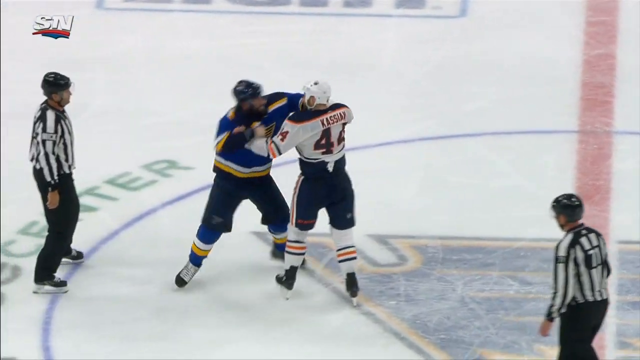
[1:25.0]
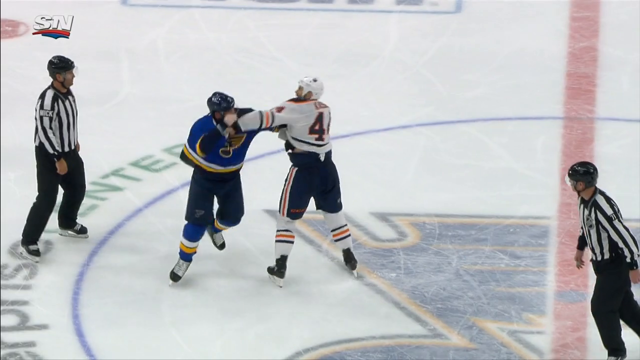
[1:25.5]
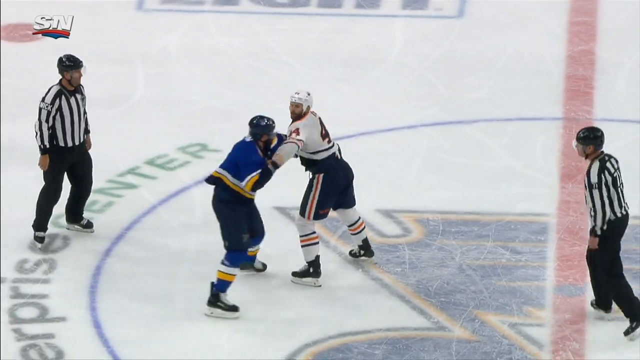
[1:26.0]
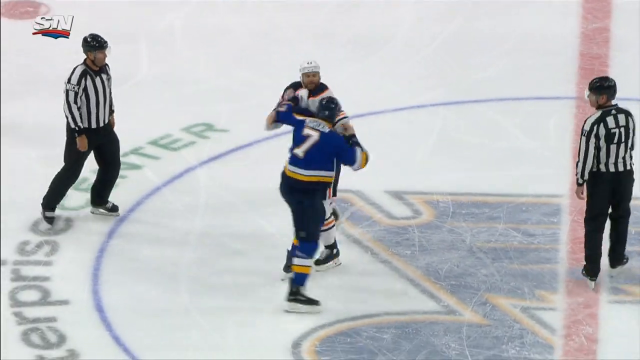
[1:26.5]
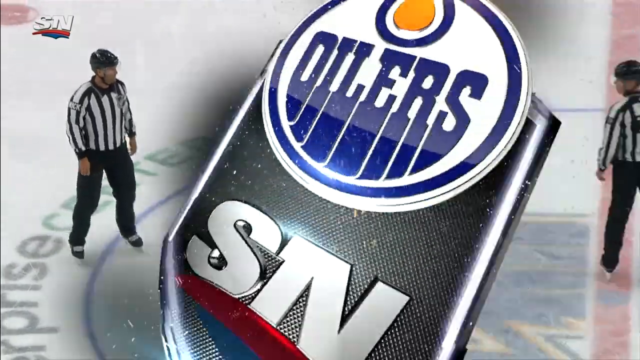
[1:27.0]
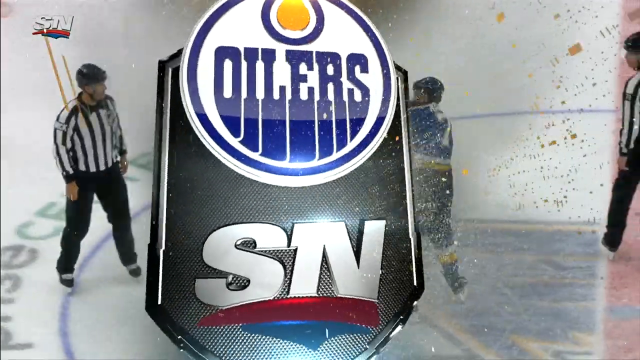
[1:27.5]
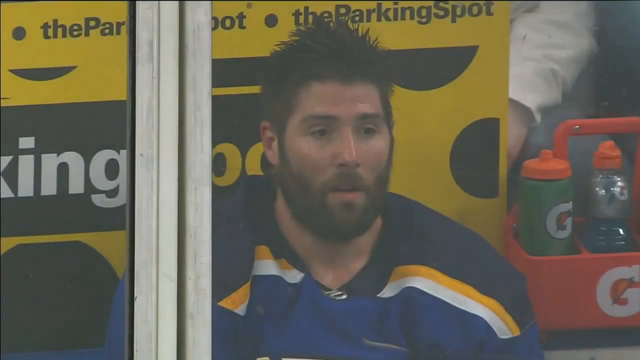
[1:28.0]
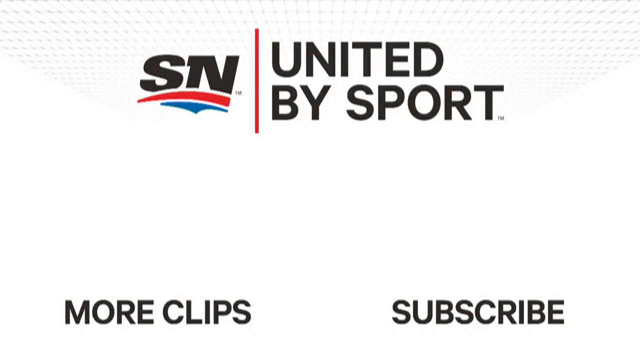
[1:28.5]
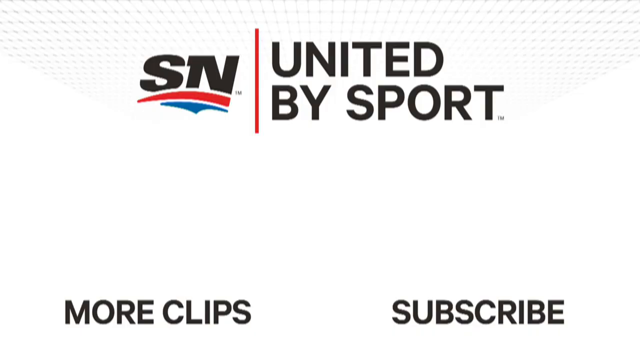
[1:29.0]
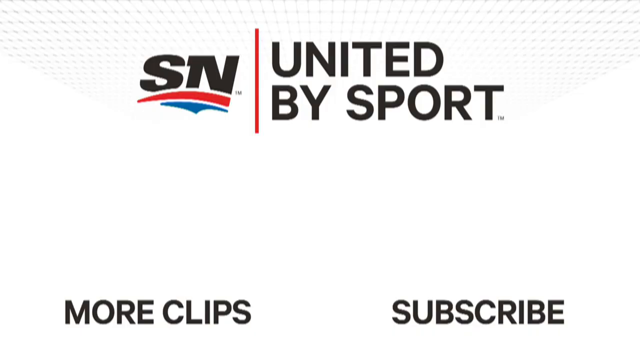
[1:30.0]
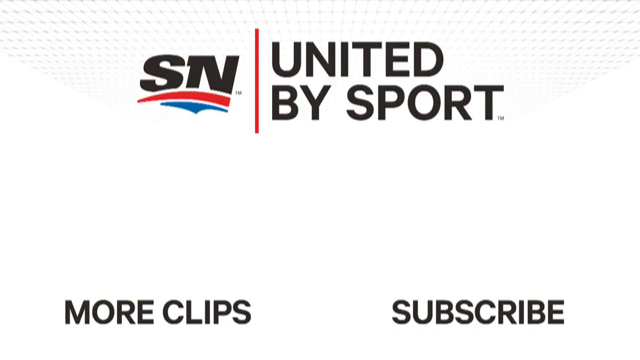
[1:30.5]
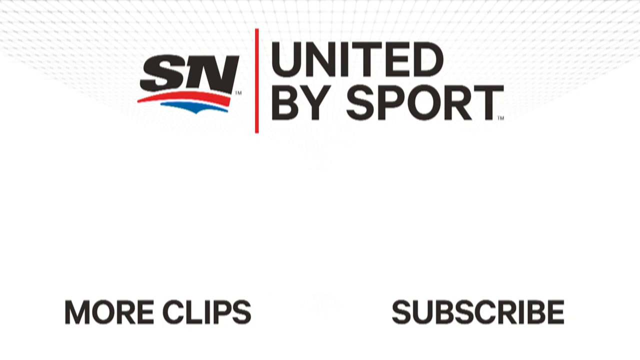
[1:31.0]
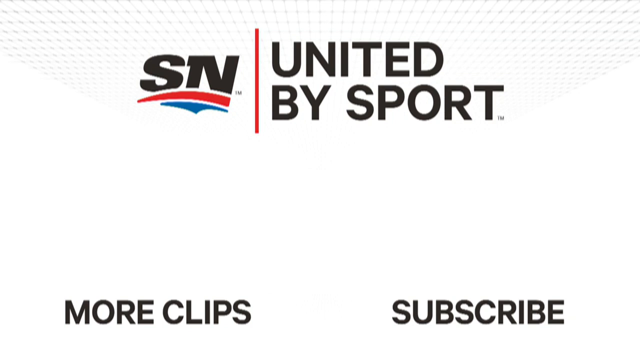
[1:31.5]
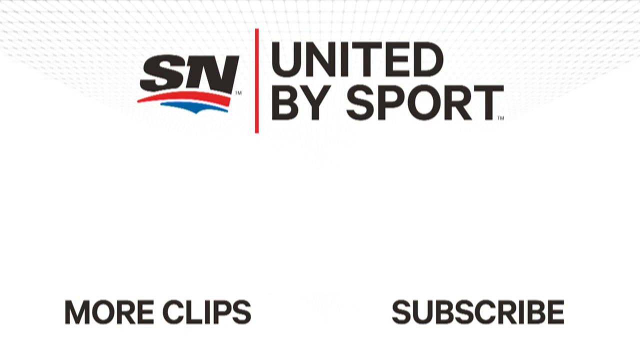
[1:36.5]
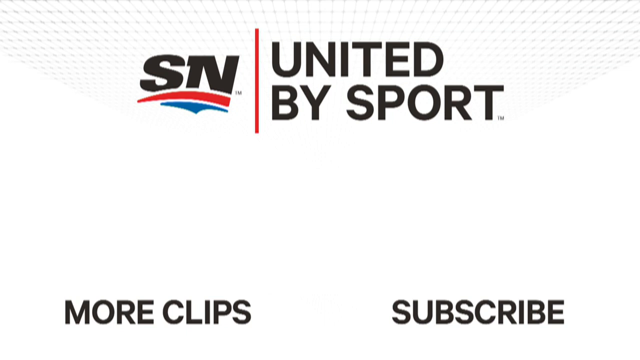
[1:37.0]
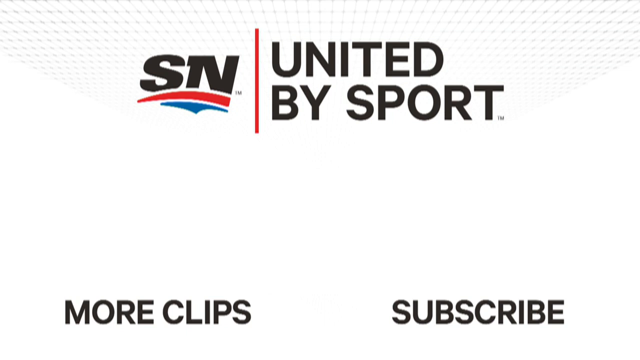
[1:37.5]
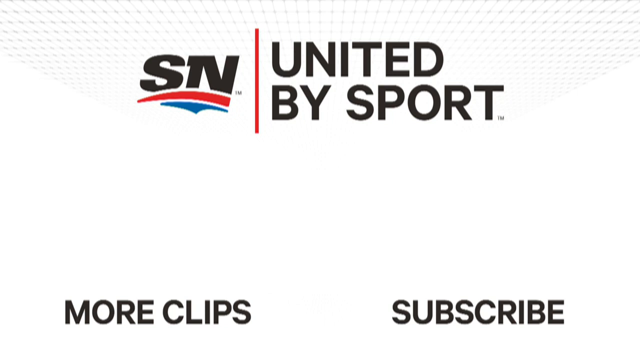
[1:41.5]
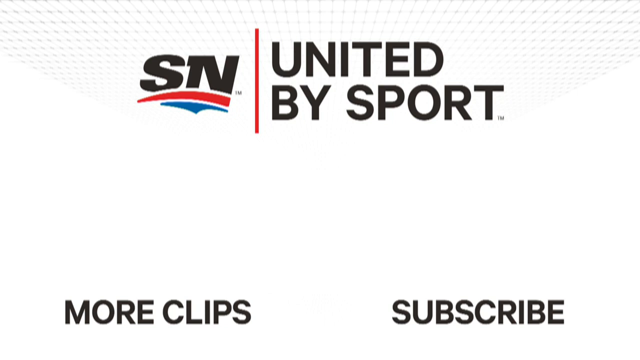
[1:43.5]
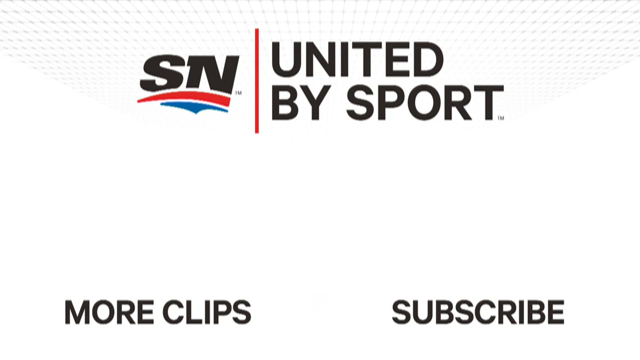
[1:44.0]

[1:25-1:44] The two players hold each other's jerseys in the center of the rink and skate around, flanked by two referees. This is very brief, and then the video goes to an end screen saying there are more clips and that viewers can subscribe. Then a white screen appears with the SN logo and the text "United by Sport". The video portion shows only the two hockey players, Kassian and Maroon, and two referees at center ice. At the very end, Maroon is seen sitting in what apparently is the penalty box.